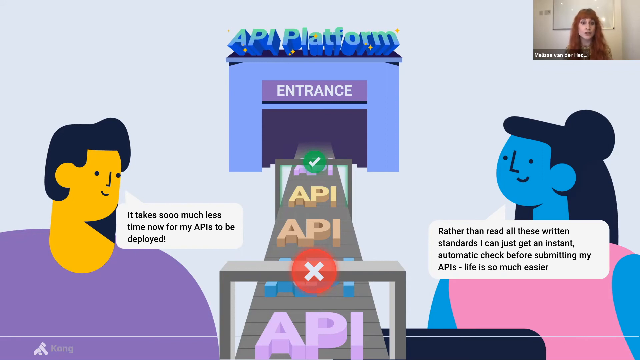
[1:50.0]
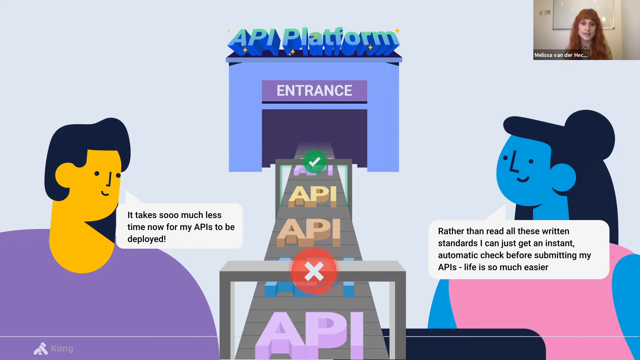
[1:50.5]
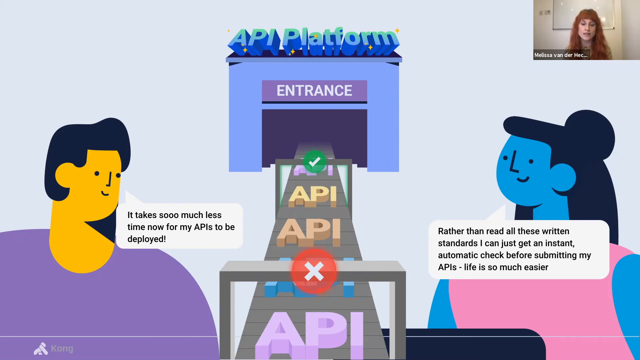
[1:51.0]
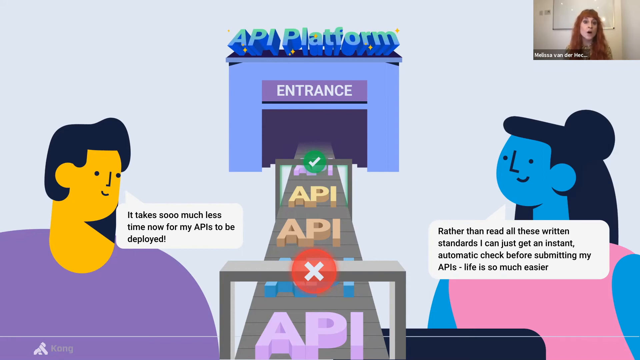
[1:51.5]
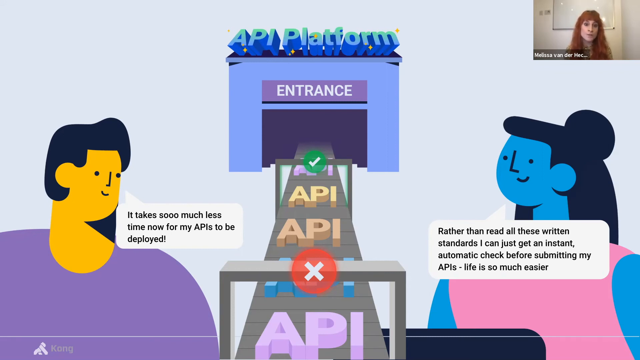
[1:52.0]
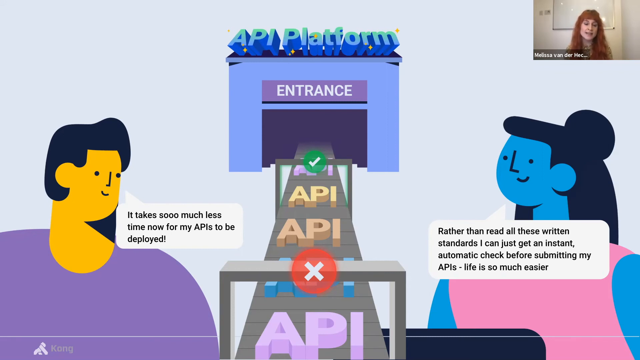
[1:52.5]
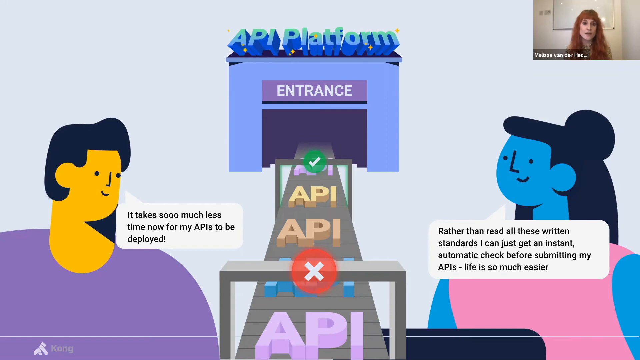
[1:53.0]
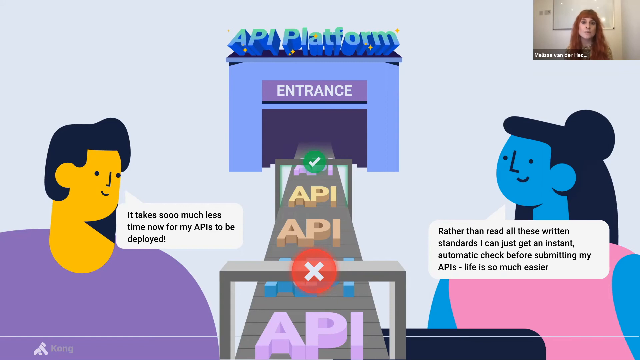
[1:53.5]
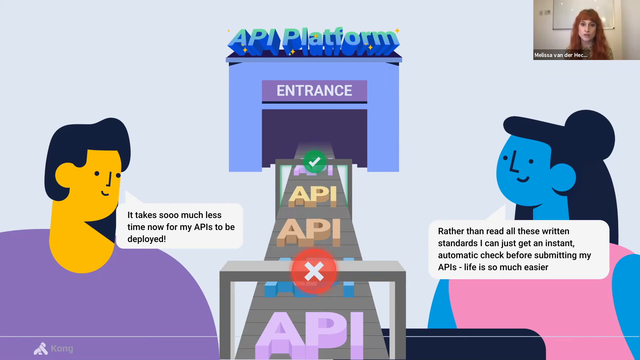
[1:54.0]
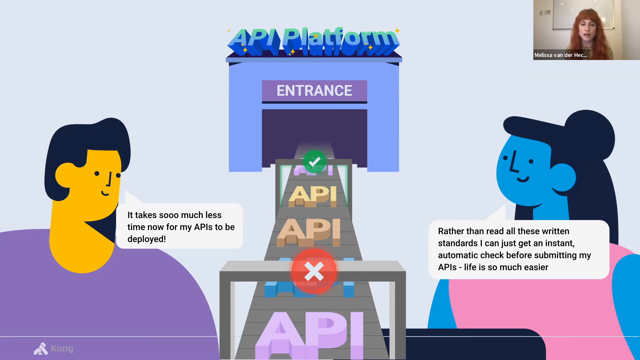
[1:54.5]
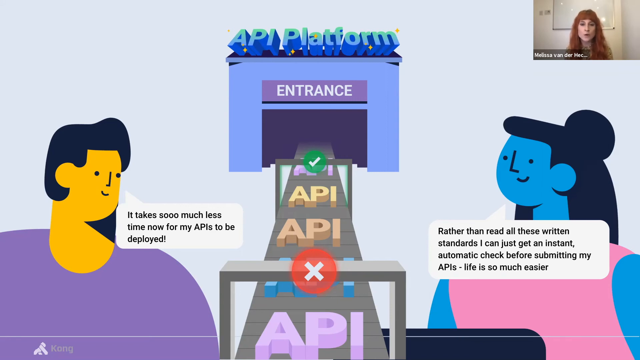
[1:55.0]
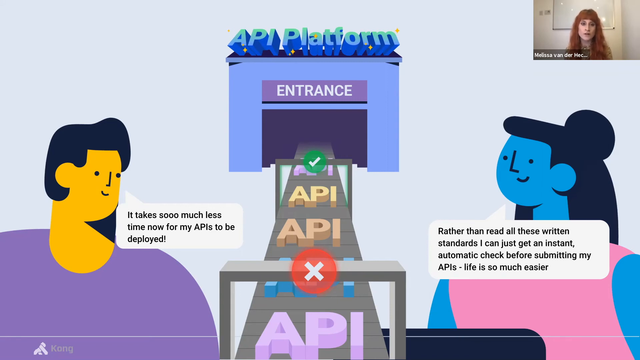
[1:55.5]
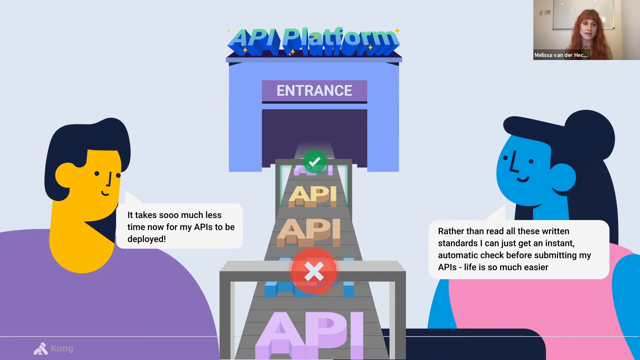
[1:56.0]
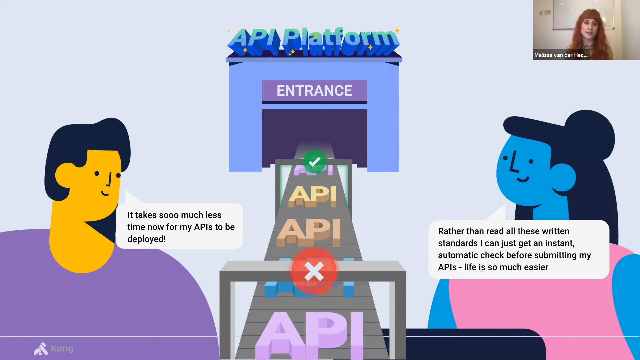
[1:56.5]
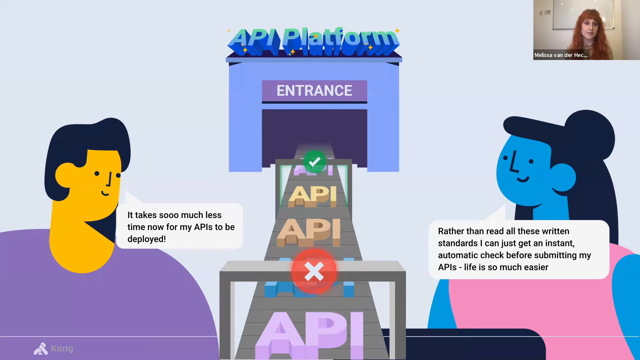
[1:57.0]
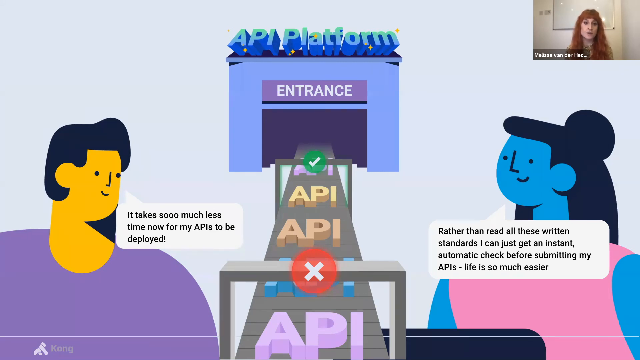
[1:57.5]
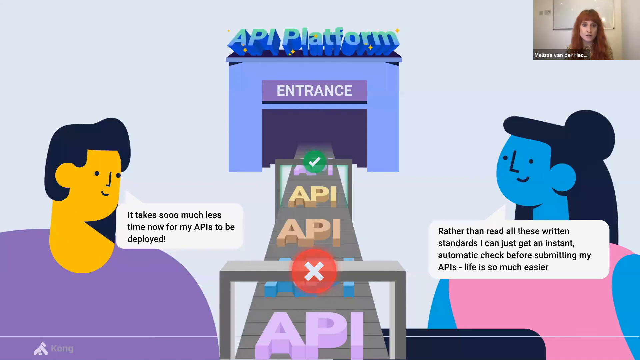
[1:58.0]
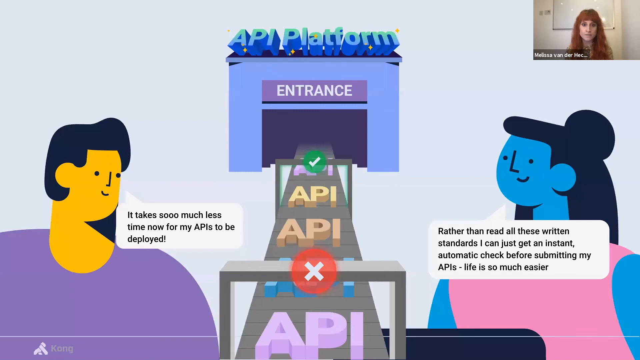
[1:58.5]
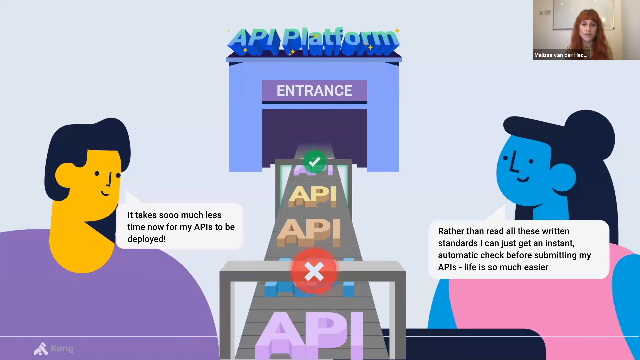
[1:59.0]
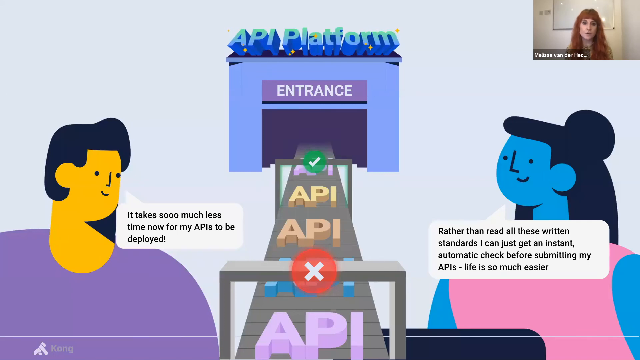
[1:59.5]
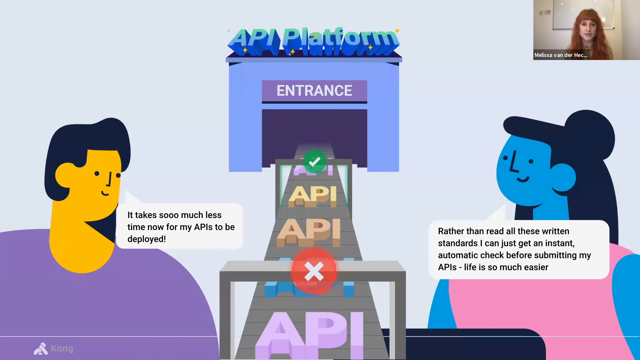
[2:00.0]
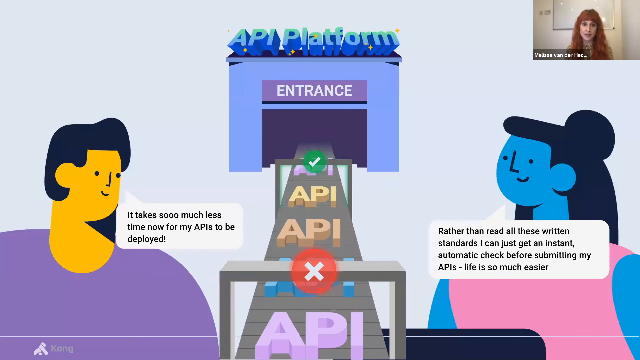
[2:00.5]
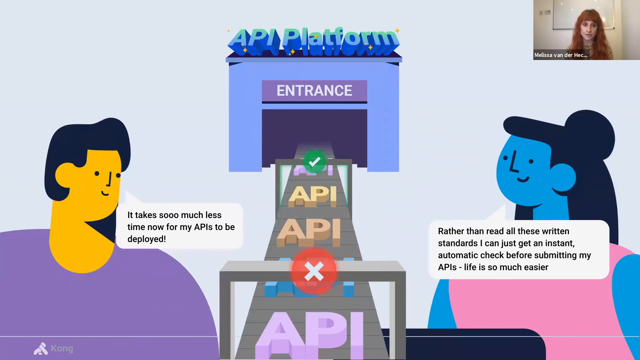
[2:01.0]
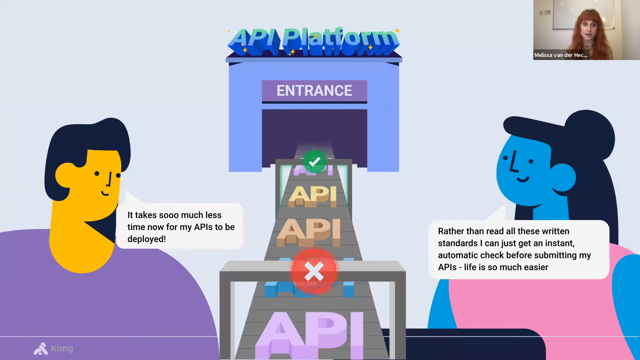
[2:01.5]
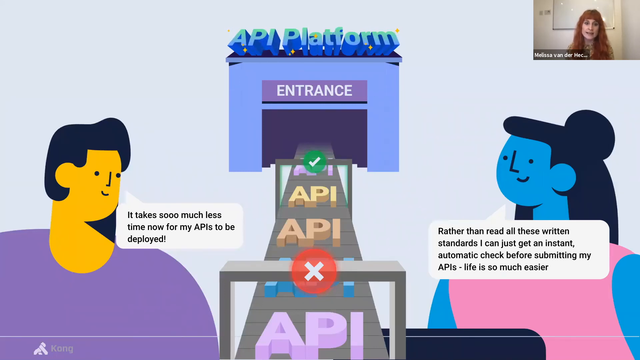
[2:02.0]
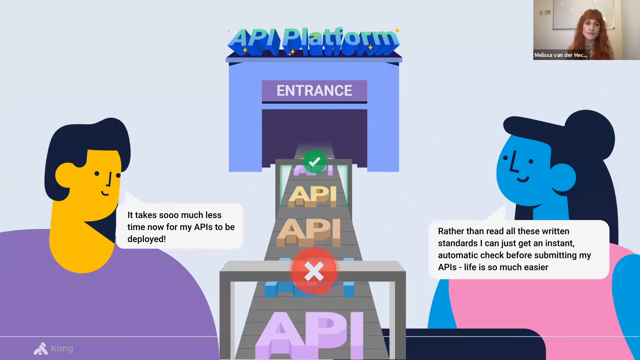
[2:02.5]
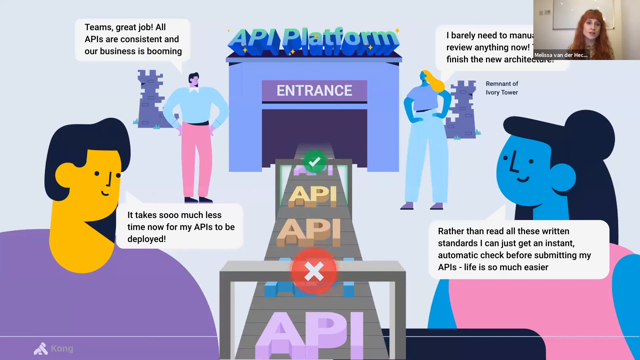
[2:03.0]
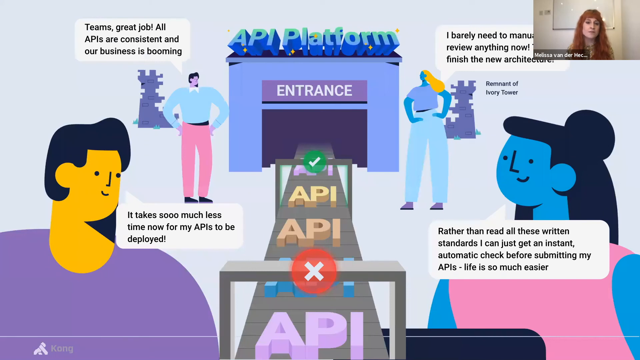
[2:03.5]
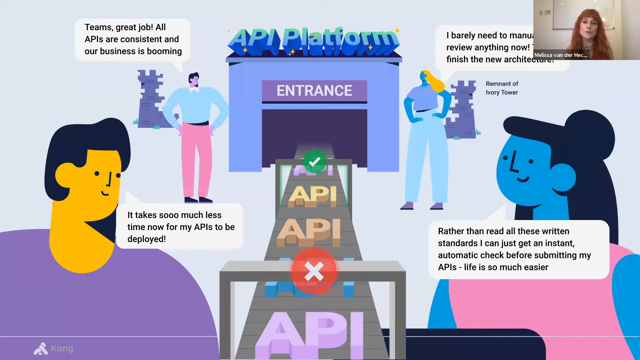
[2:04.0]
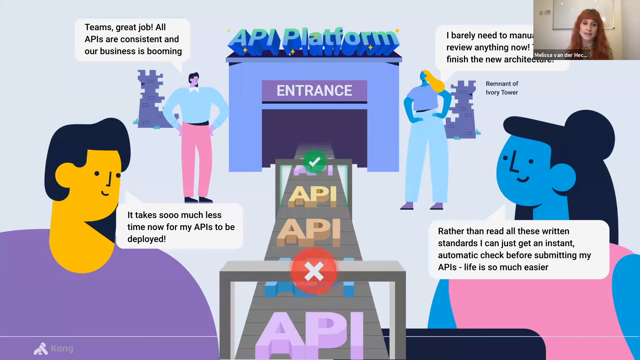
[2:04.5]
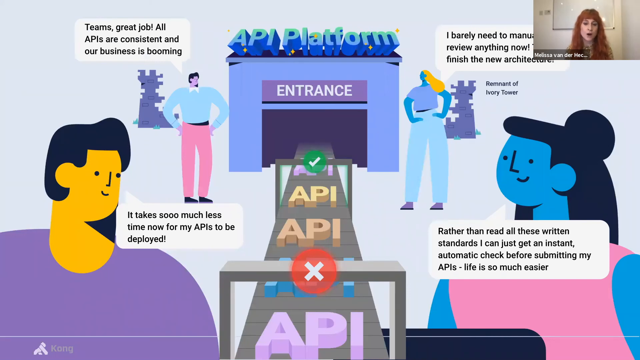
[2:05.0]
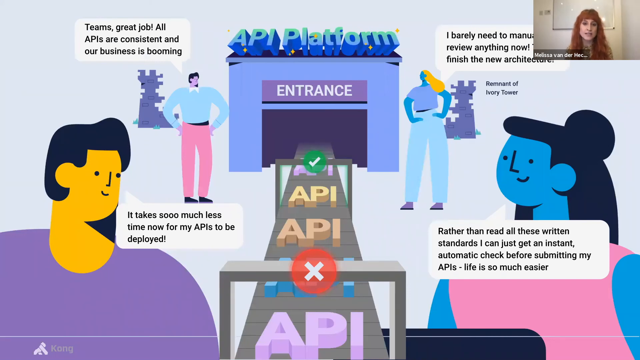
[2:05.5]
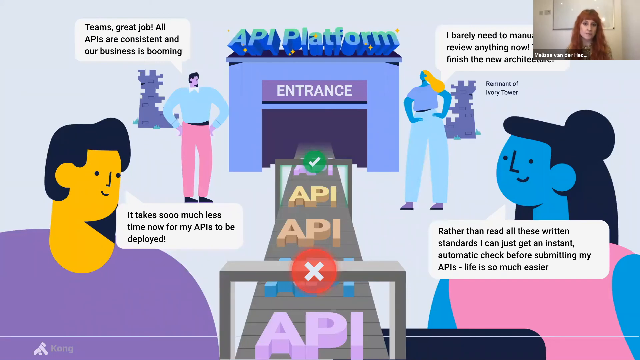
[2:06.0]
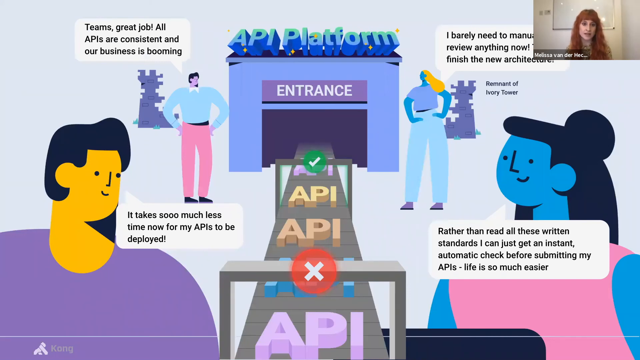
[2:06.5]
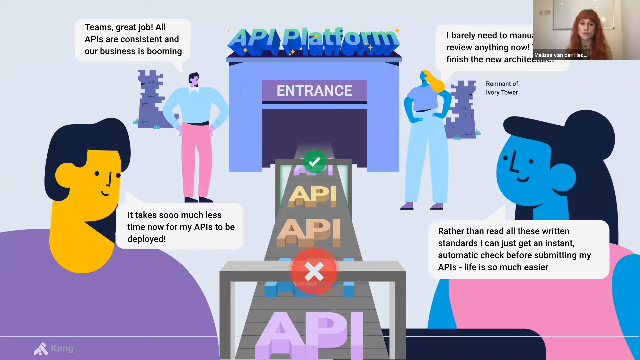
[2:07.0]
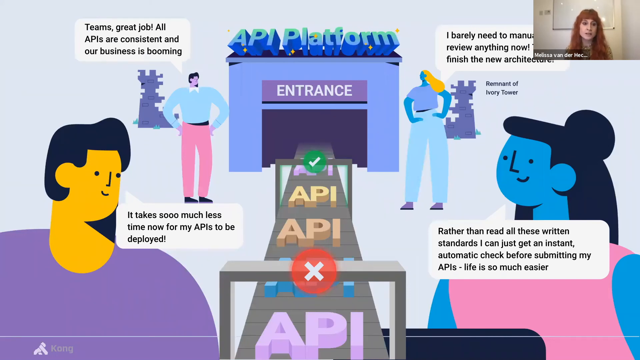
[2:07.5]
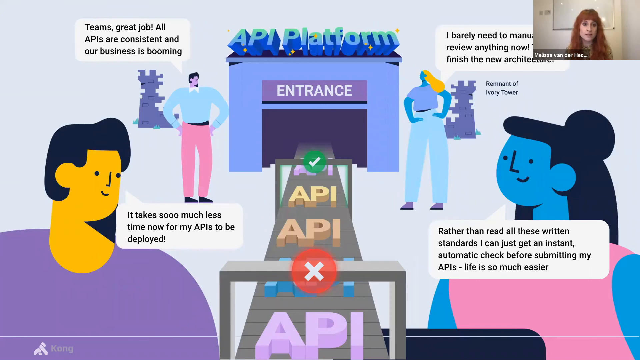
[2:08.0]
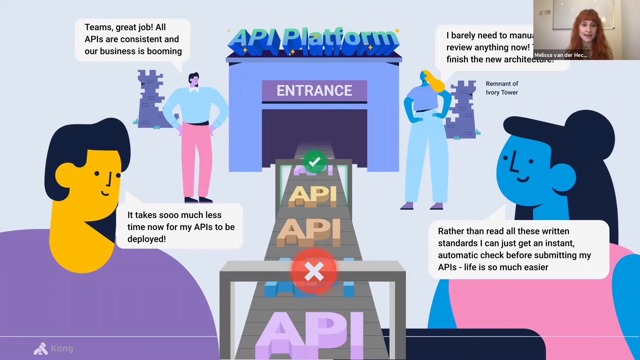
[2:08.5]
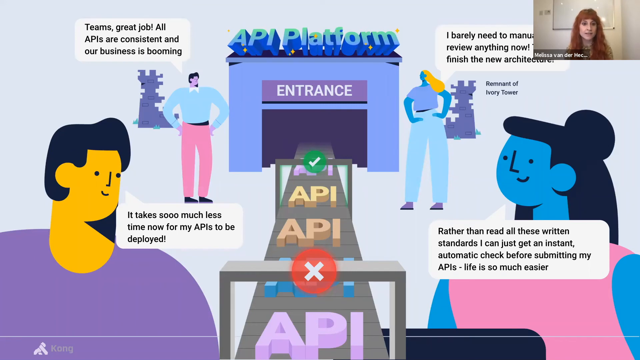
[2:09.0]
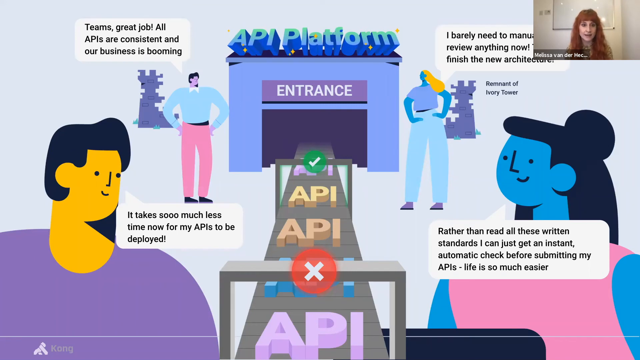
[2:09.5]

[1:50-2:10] The same assembly-line slide takes up most of the screen, with the speaker in a small video on the right-hand side, her head moving slightly as she speaks. A couple of seconds in, new vector drawings appear on the slide. On the left is a vector drawing of a man that says "seems great job, all APIs are consistent and our business is booming." At the same time, on the right is a vector drawing of a woman whose dialogue is slightly blocked by the speaker's video, but she seems to be saying "I barely need to manually review anything now", followed by something about finishing new architecture. Along with these two drawings, vector images of ruined towers appear behind them, each small and a bit to the side of the figures. The one on the right, behind the woman, is labeled "remnant of the ivory tower."